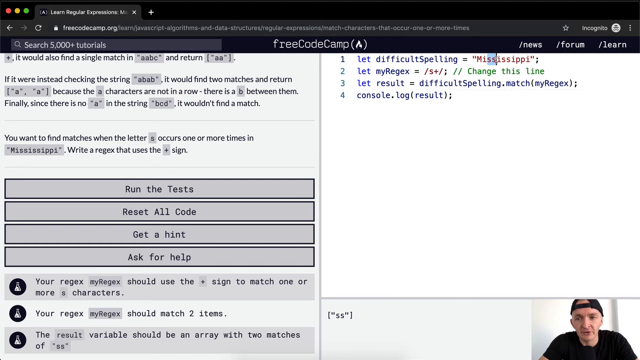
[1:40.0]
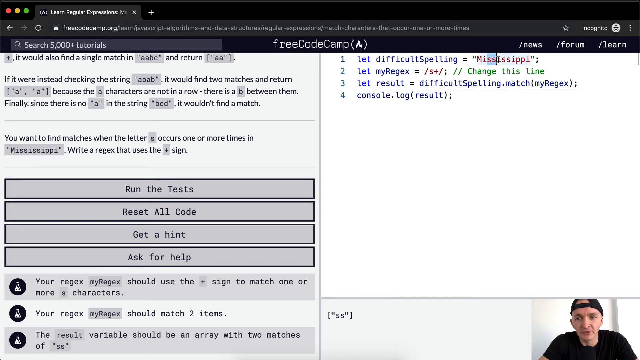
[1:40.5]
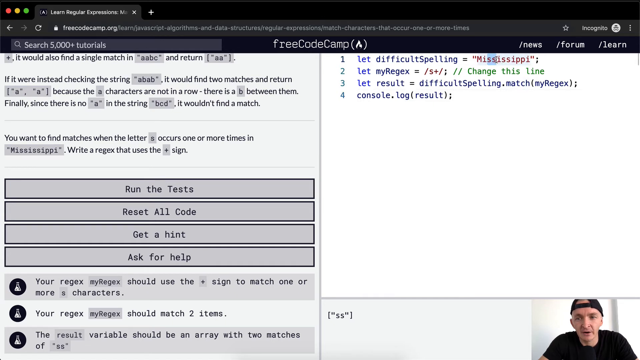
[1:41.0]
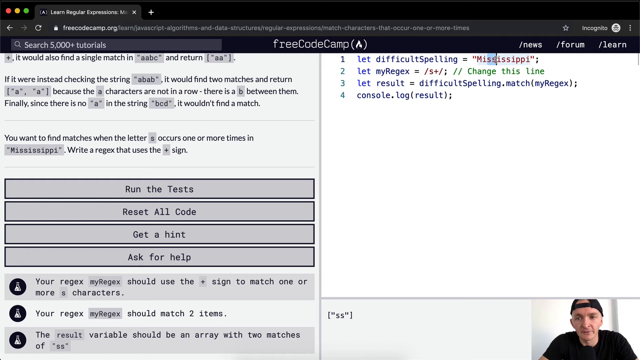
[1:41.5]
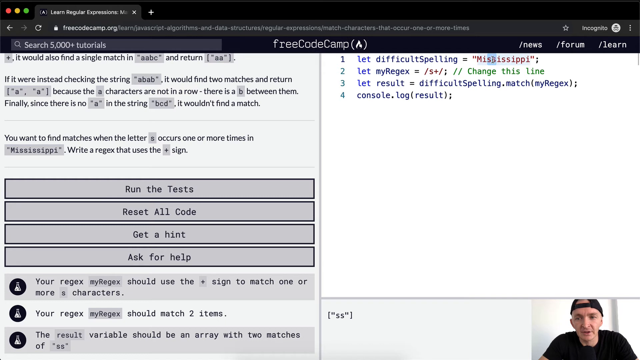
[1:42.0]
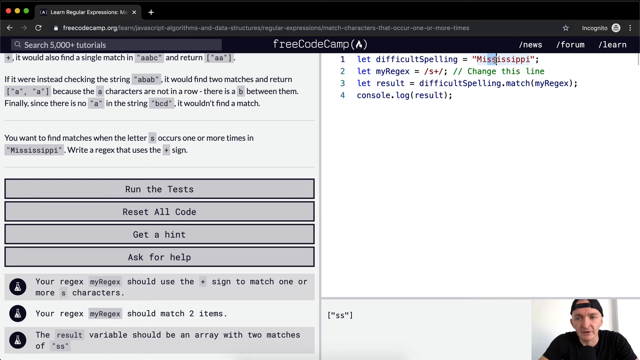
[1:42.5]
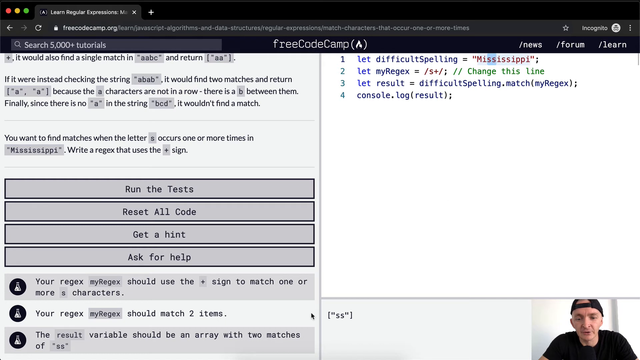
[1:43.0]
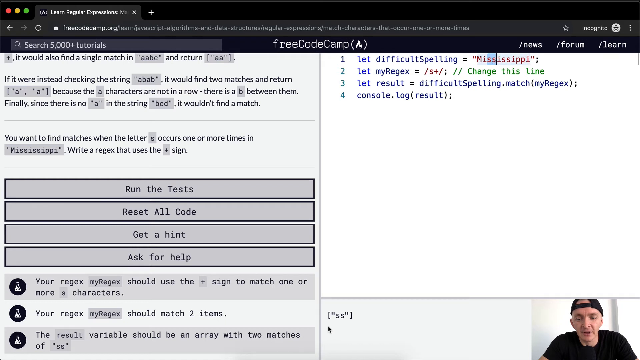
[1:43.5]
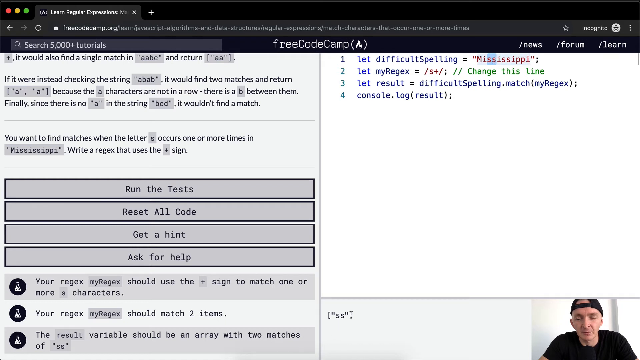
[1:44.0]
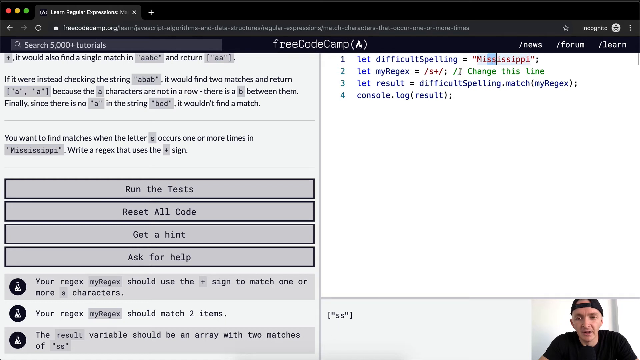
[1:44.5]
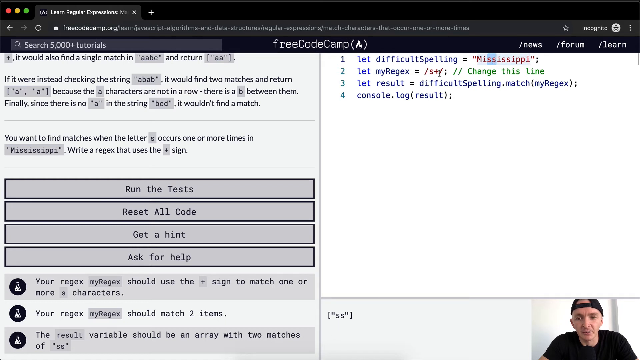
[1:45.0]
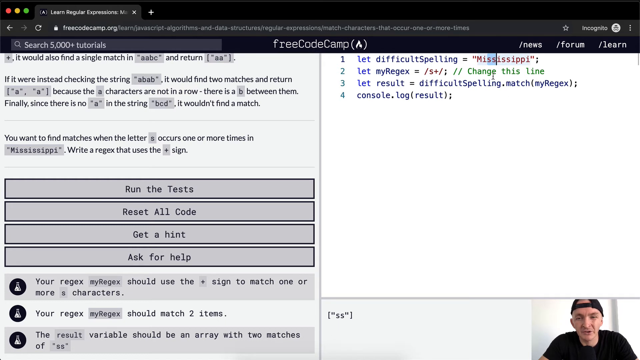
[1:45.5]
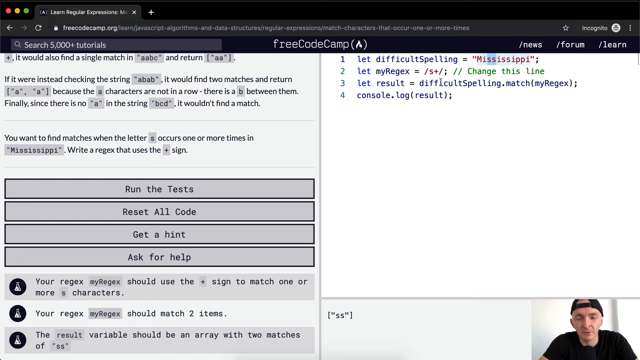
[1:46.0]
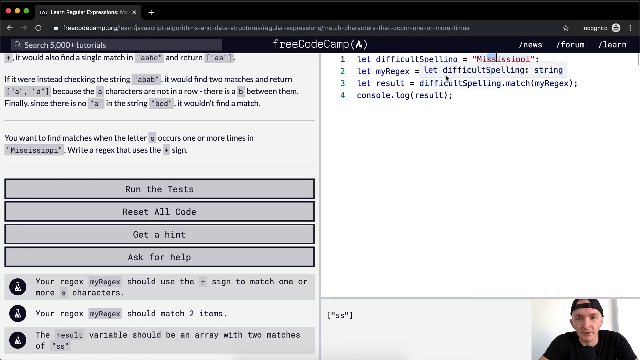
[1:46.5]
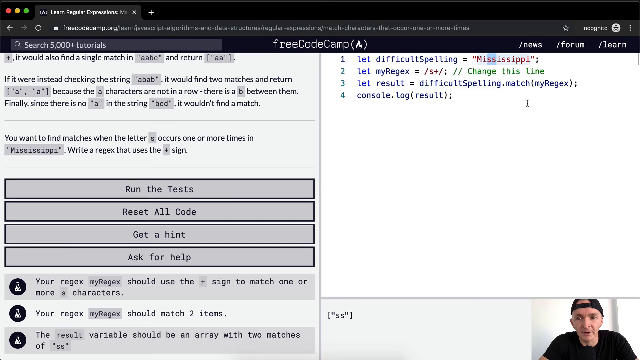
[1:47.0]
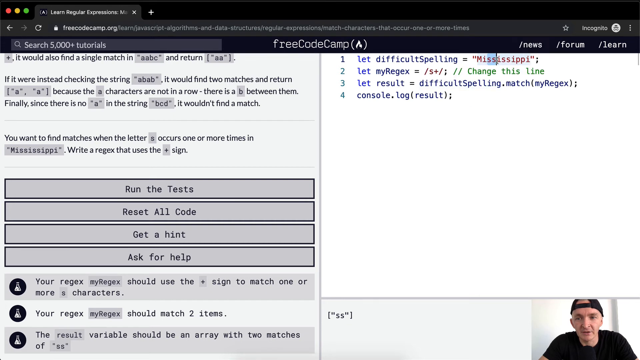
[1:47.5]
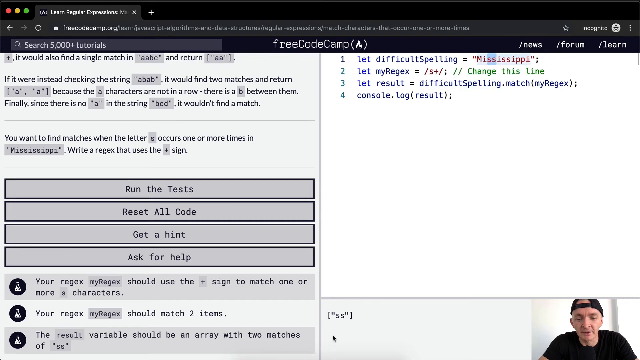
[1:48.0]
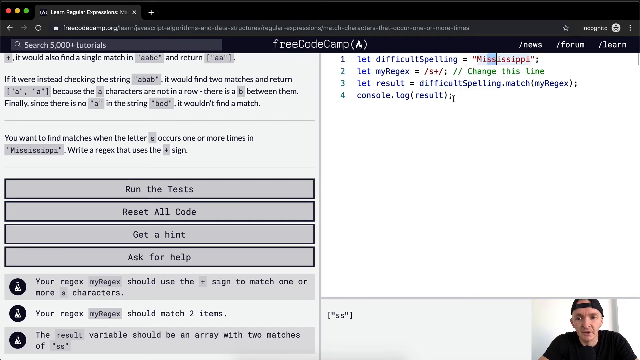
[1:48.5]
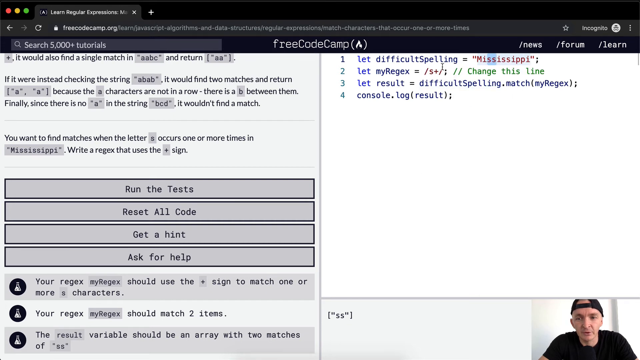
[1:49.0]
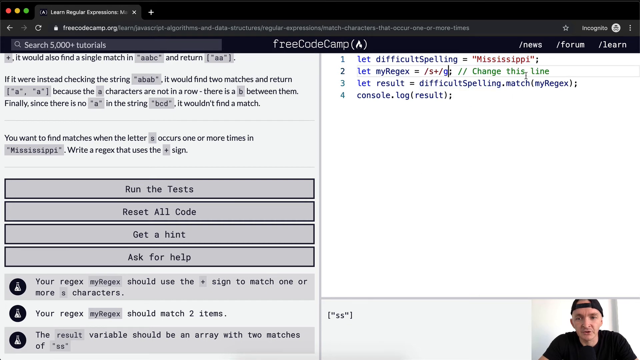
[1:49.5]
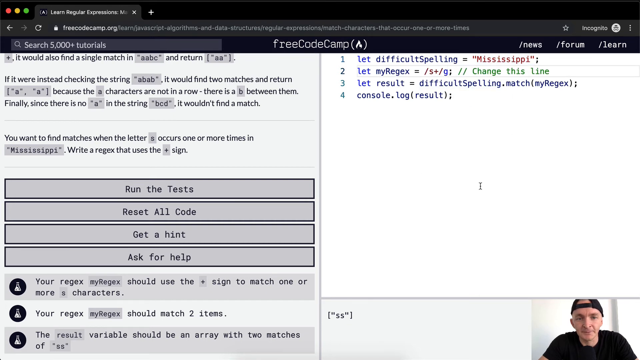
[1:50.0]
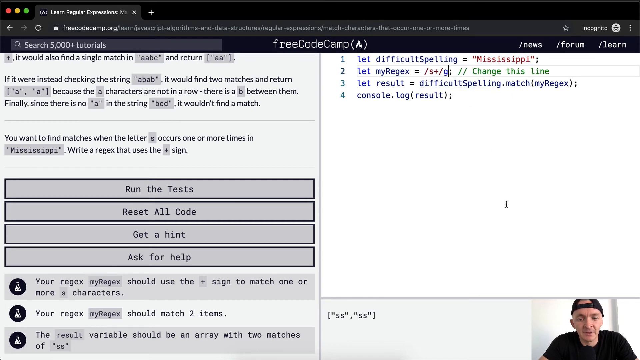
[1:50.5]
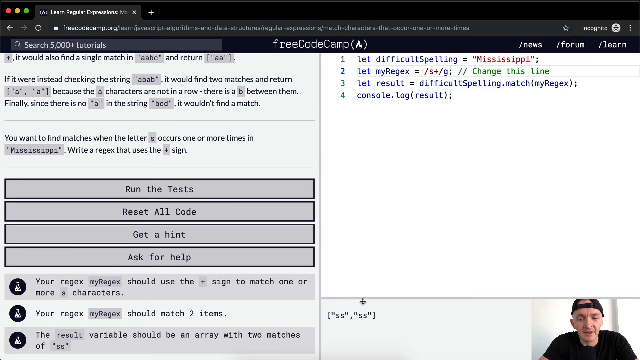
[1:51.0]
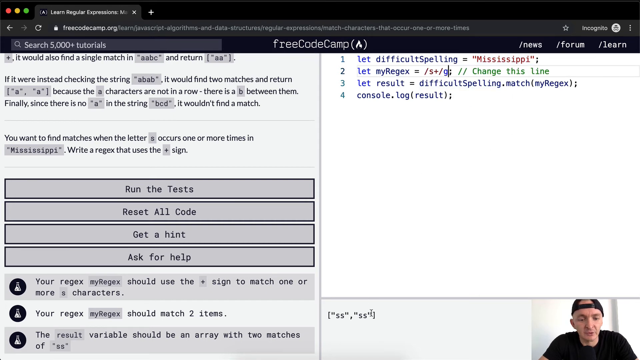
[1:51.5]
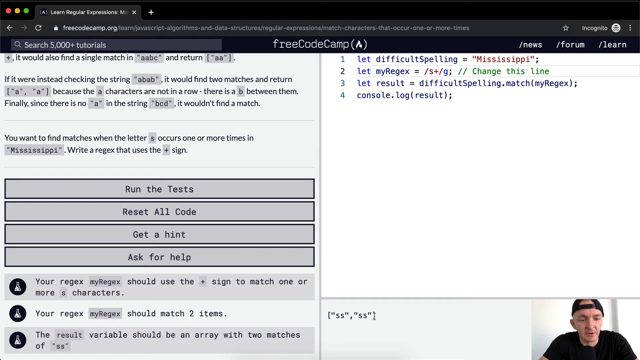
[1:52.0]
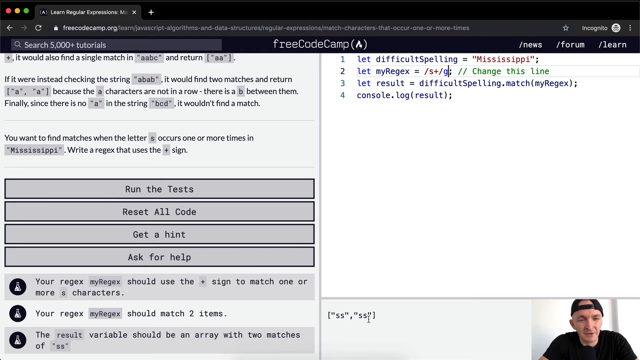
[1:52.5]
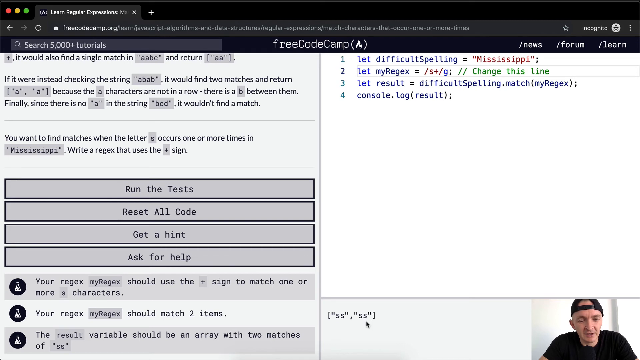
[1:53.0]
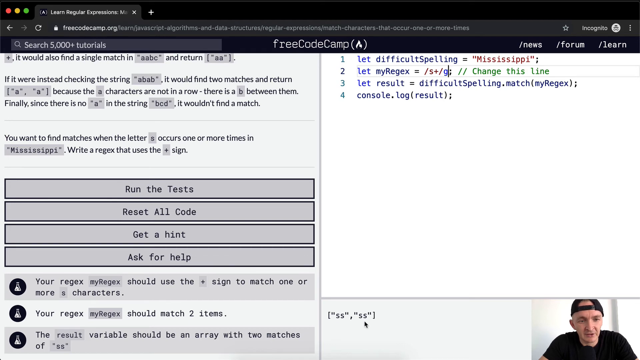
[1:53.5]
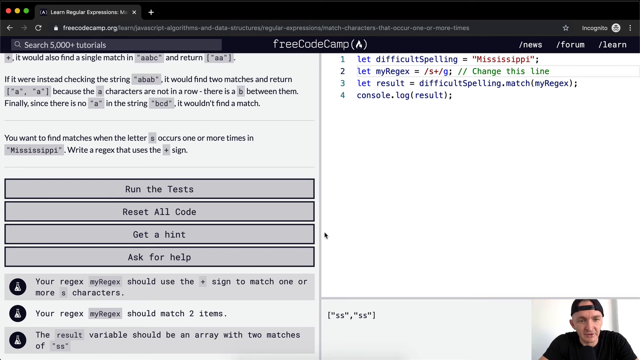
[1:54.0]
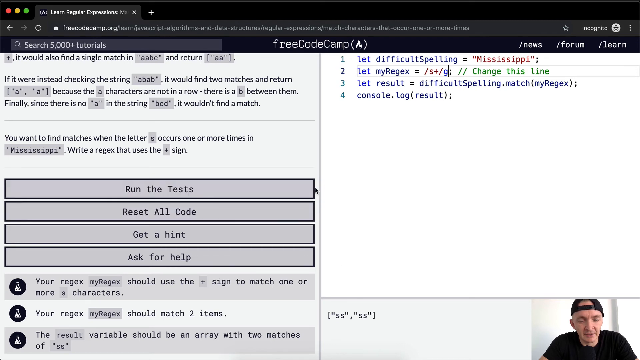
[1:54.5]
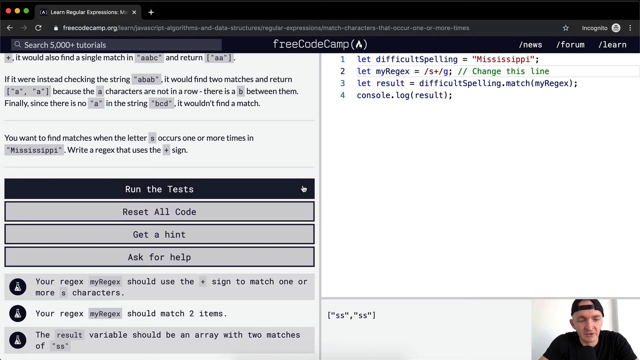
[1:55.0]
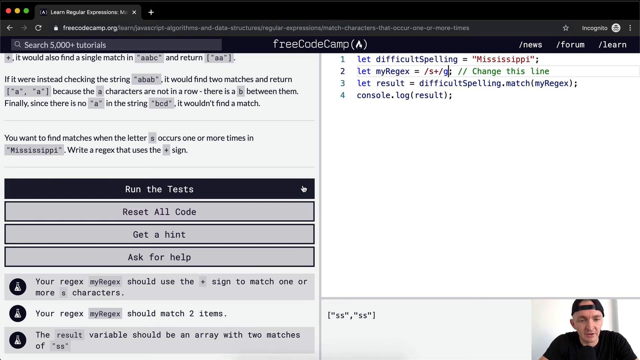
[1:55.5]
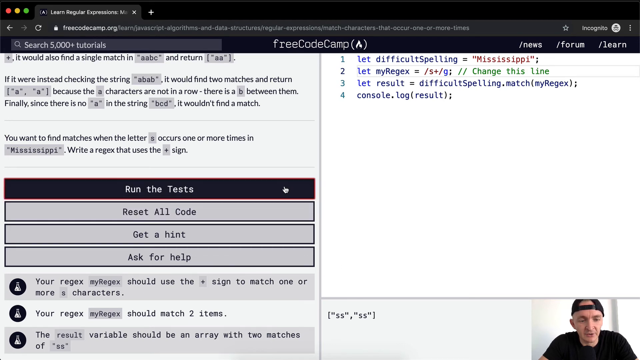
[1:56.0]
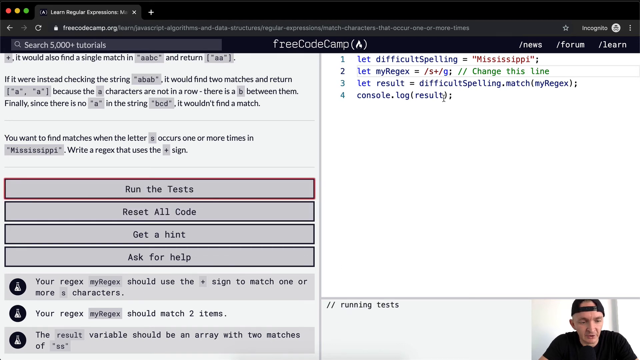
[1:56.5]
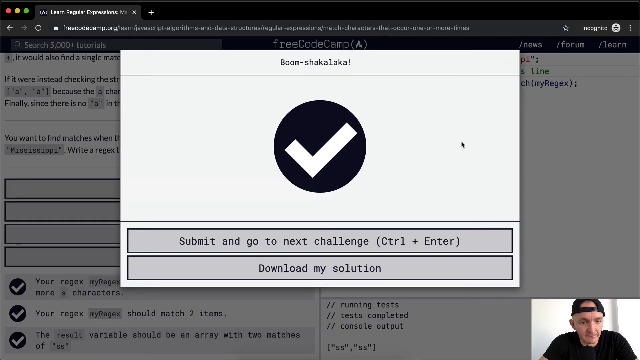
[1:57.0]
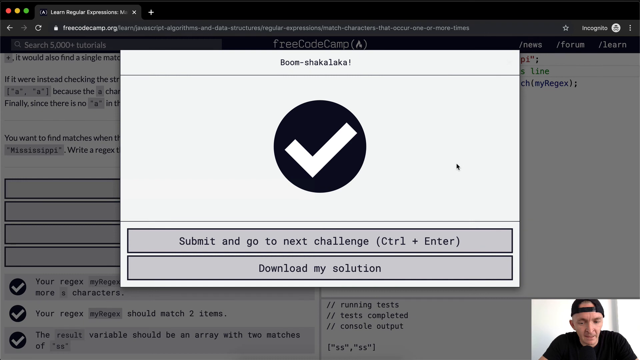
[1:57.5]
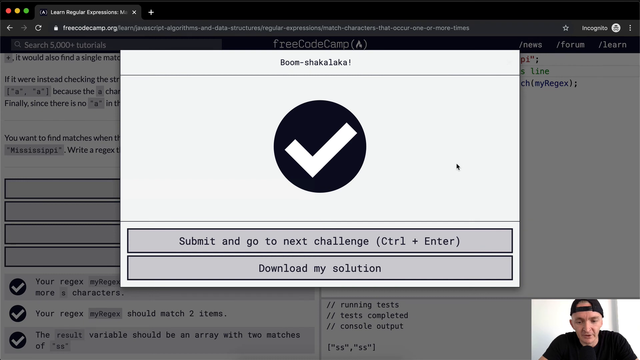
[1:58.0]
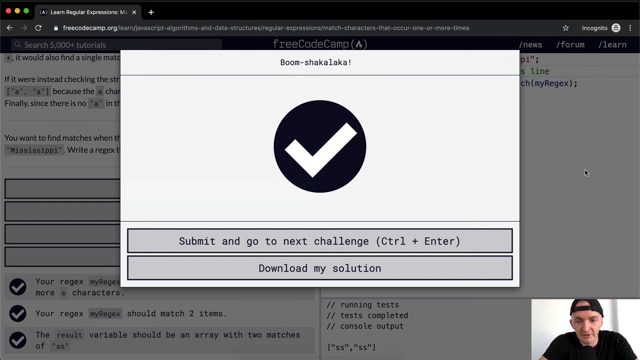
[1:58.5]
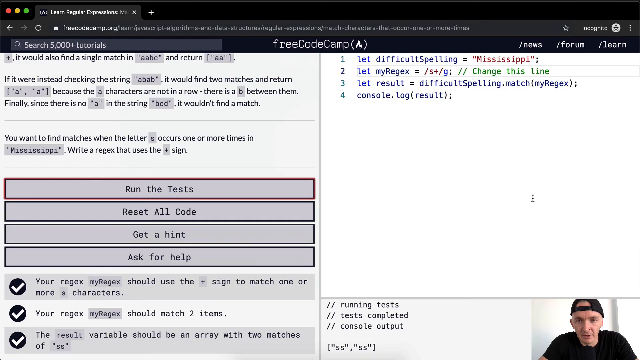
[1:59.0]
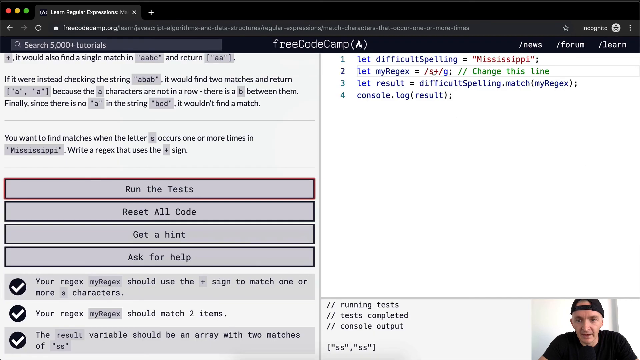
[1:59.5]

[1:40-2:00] The open tab shows freecodecamp.org in the URL, and the top of the page says "Free Code Camp" with an "A" in parentheses. Beside that, on the left in the bookmarks bar, it says "search 5000 plus tutorials". Below is a white screen split down the middle, with instructions on the left and a work console on the right for writing code. Under the instructions on the left are buttons that say "run the tests", "reset all code", "get a hint" and "ask for help". The narrator, wearing a black ball cap and a black t-shirt, appears in a live feed in the bottom right corner. His mouse moves constantly from spot to spot, slowly circling locations and following along word for word as he talks.